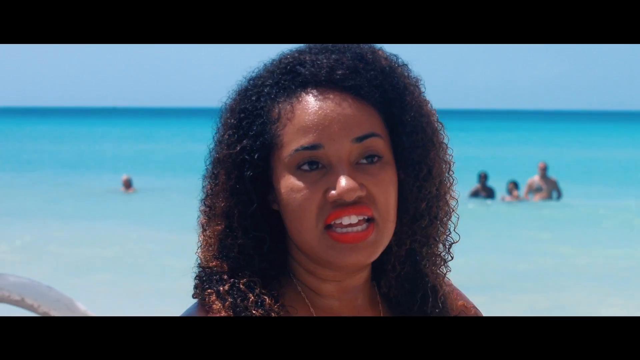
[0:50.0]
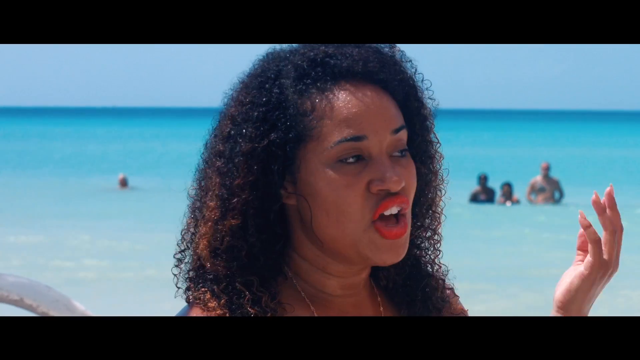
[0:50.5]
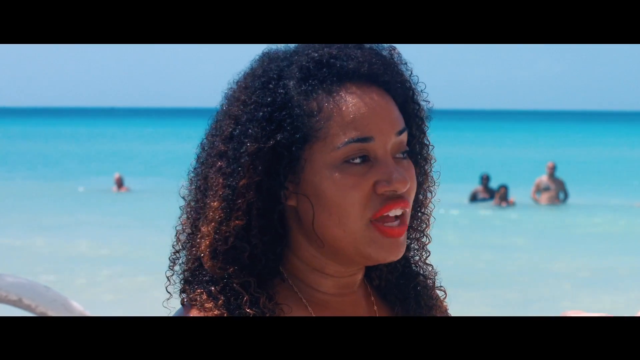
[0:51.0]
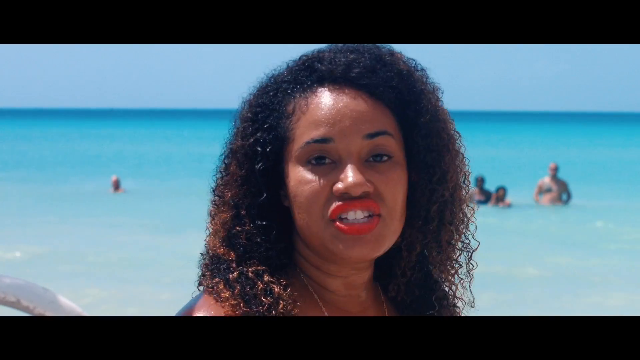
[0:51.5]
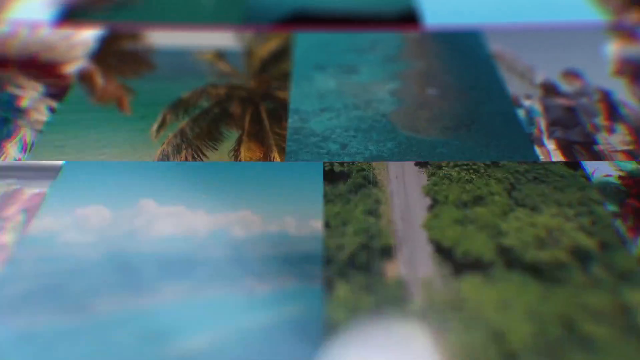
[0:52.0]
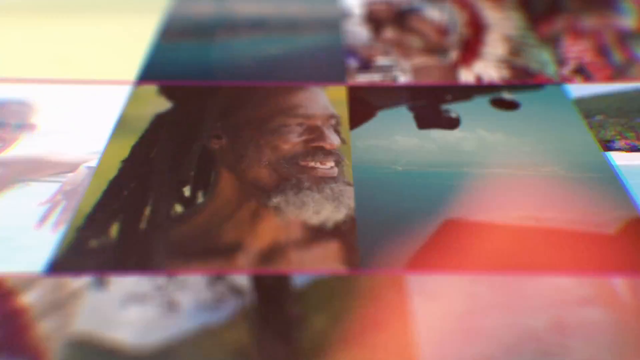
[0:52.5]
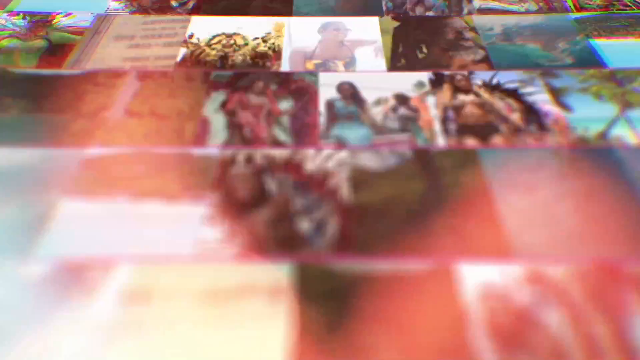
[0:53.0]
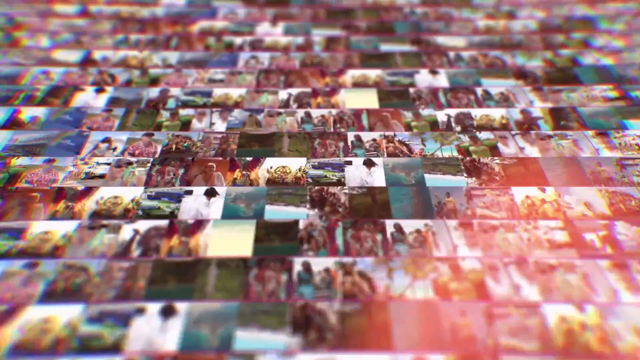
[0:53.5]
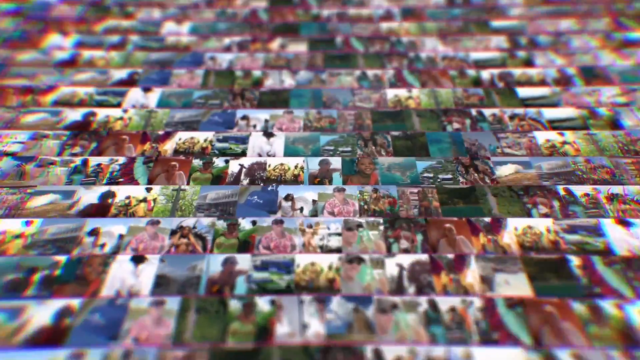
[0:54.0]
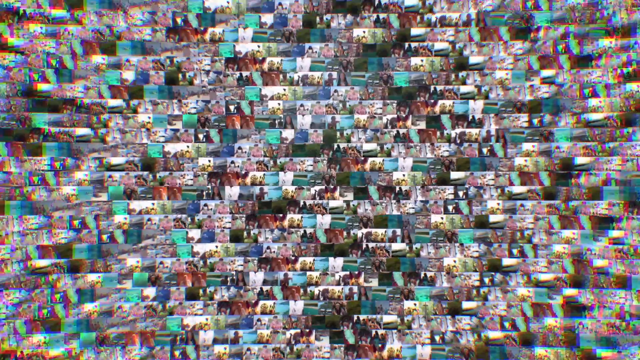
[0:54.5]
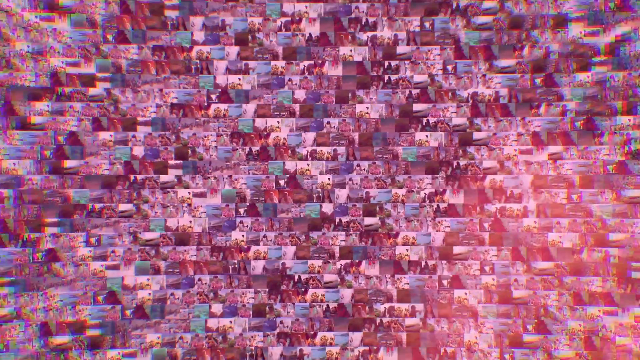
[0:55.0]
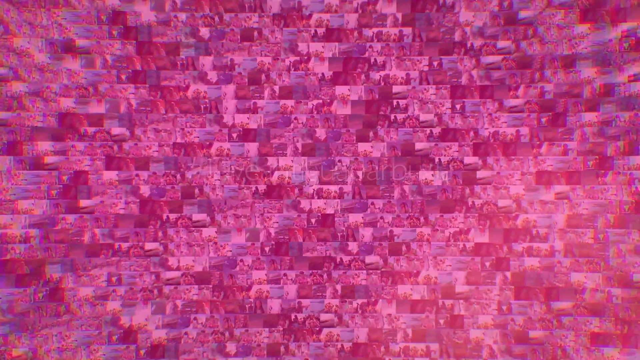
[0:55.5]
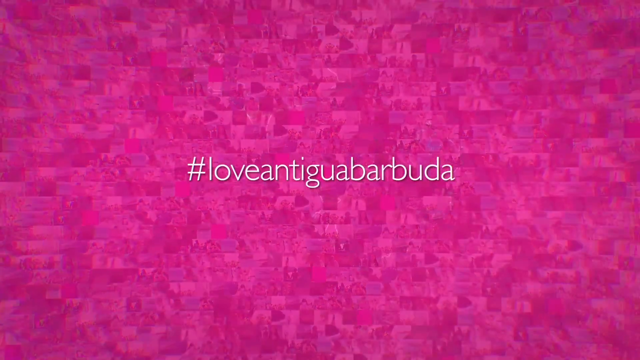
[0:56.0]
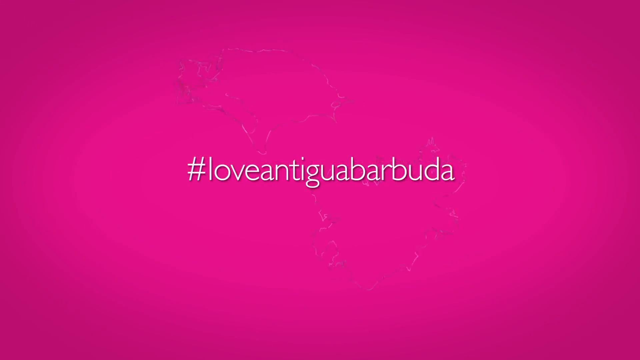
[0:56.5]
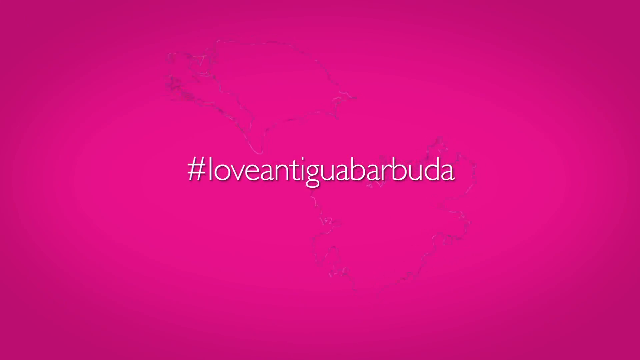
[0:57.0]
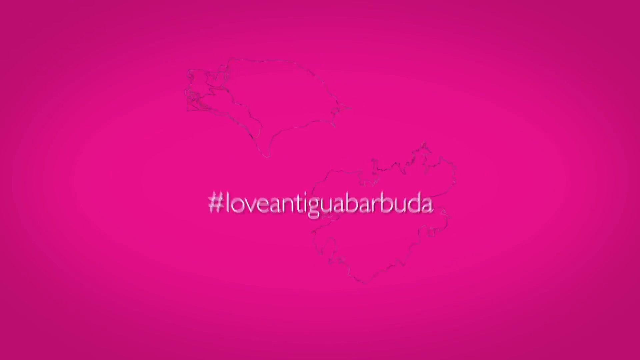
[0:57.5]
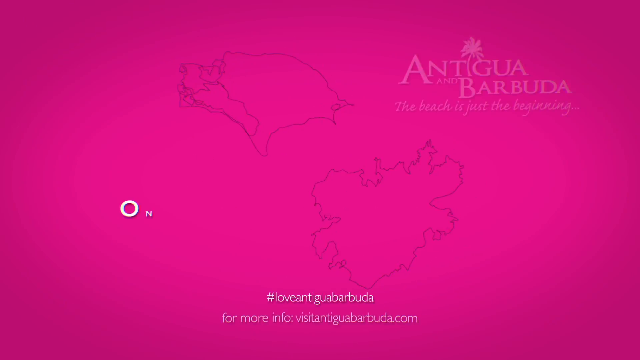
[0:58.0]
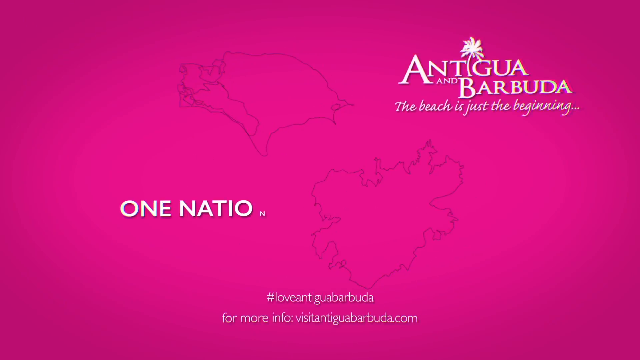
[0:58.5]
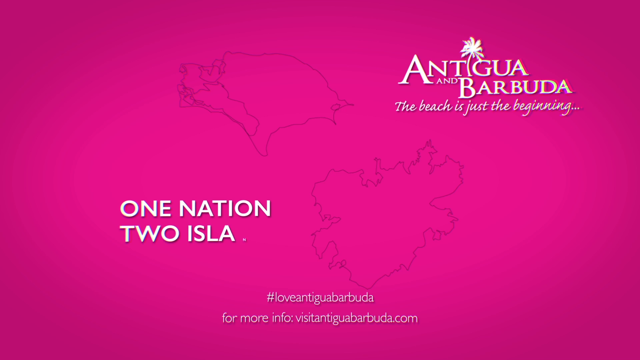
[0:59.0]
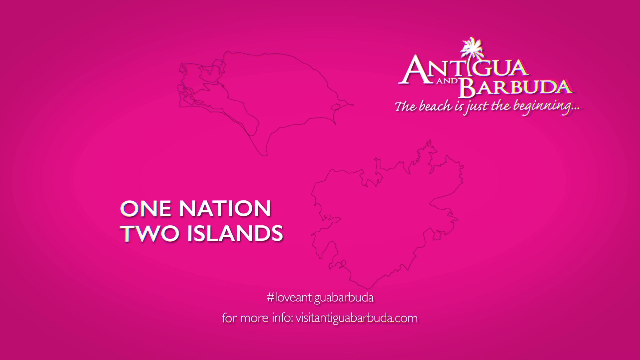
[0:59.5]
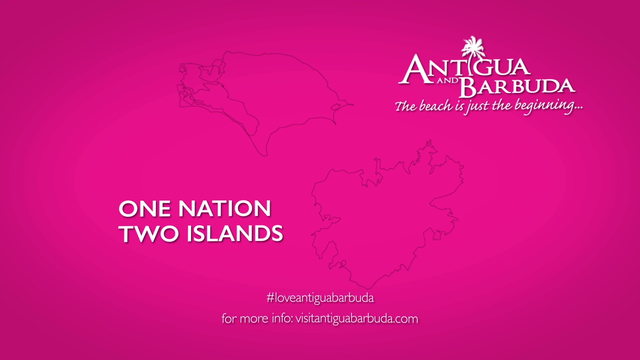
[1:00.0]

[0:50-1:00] A black woman with red lipstick talks; behind her is a bay with people in the water, mostly just standing. A large number of photos fill the screen, hundreds, maybe a thousand of them. The screen then changes to a pink background with the text "#love Antigua Barbuda." The outlines of two nations appear against the pink background; the upper right says "Antigua and Barbuda," with a palm tree on the i of Antigua, and below that it says "the beach is just the beginning." Hashtags appear near the bottom, and the lower left says "two islands, one nation."